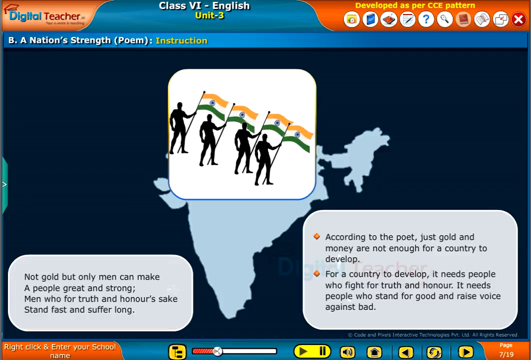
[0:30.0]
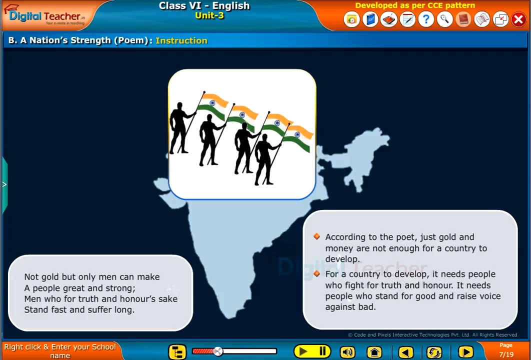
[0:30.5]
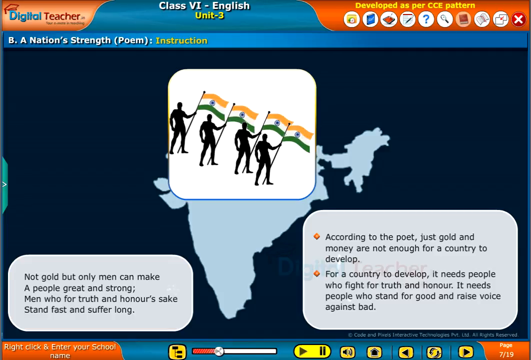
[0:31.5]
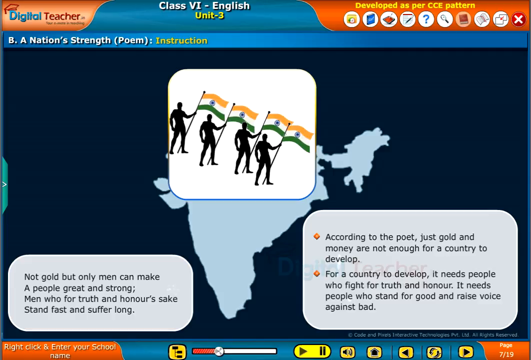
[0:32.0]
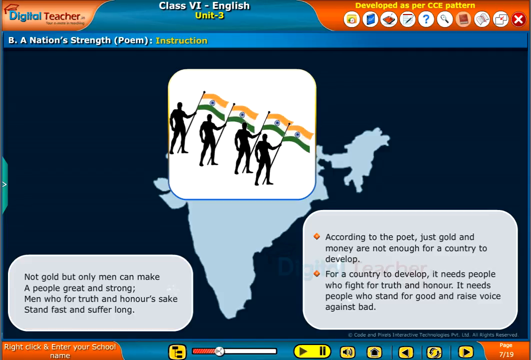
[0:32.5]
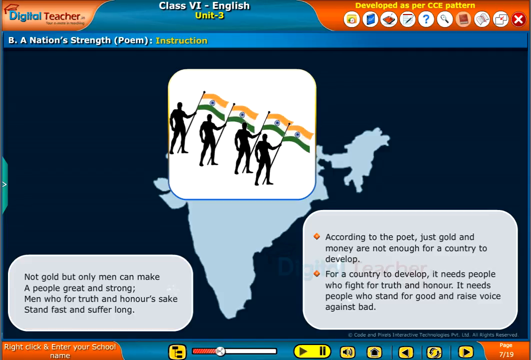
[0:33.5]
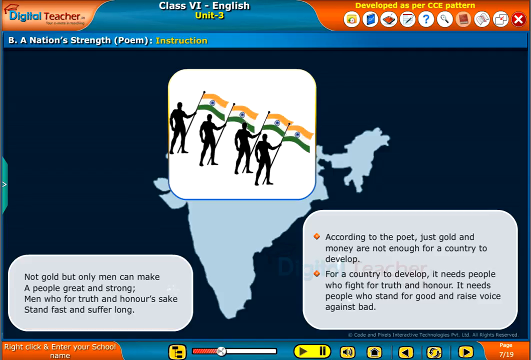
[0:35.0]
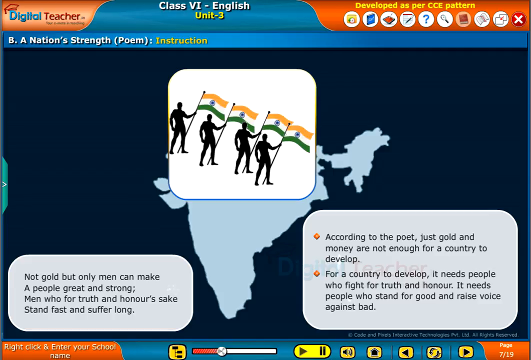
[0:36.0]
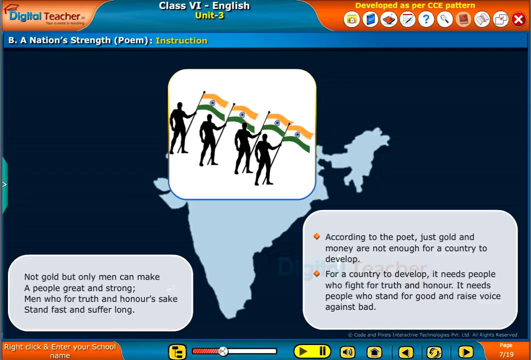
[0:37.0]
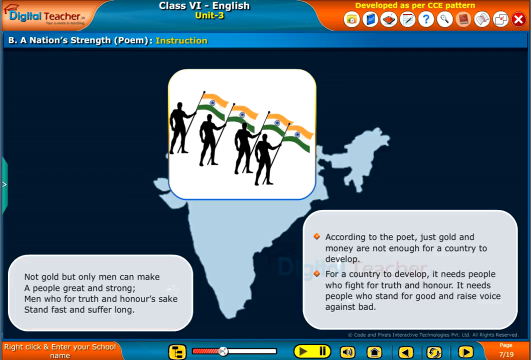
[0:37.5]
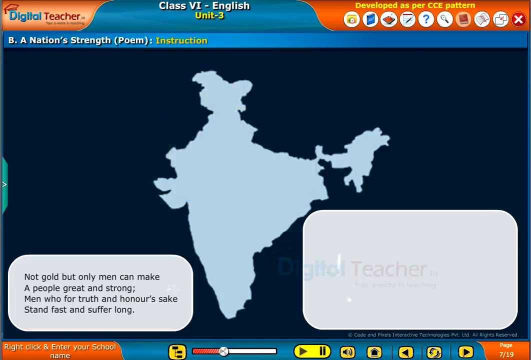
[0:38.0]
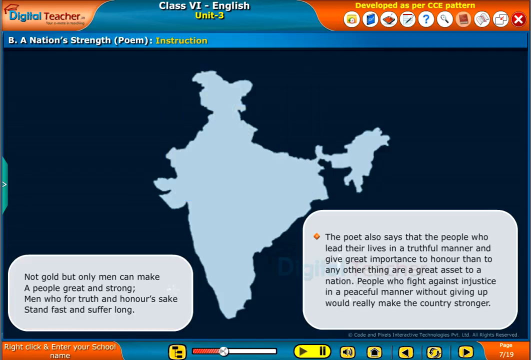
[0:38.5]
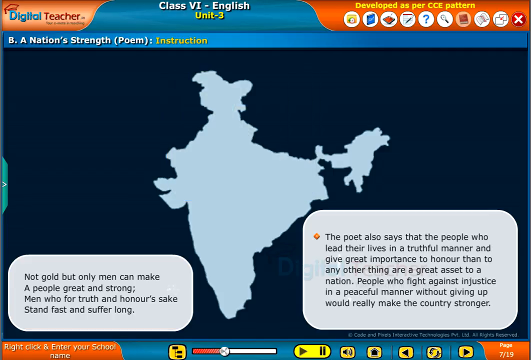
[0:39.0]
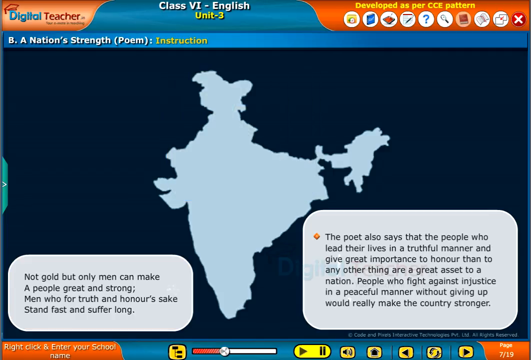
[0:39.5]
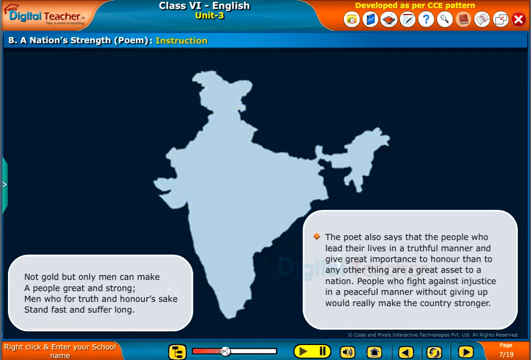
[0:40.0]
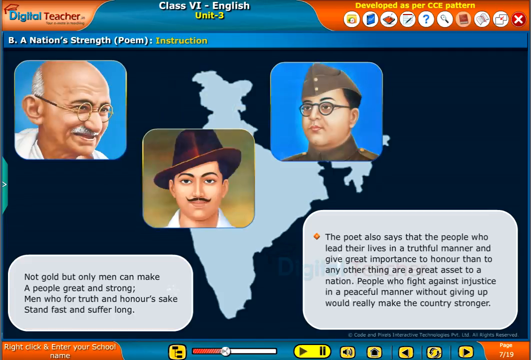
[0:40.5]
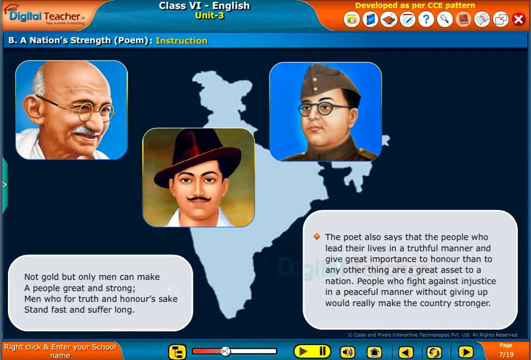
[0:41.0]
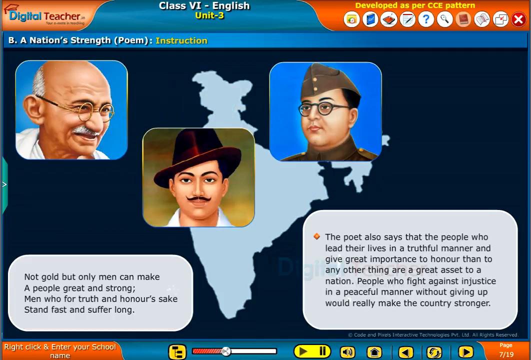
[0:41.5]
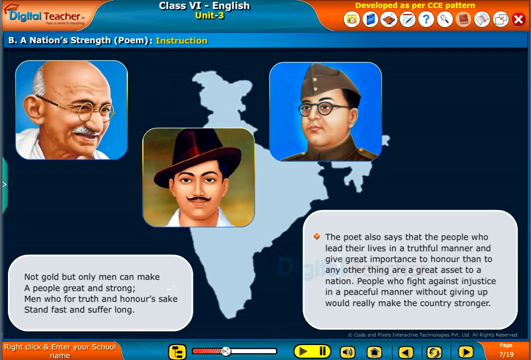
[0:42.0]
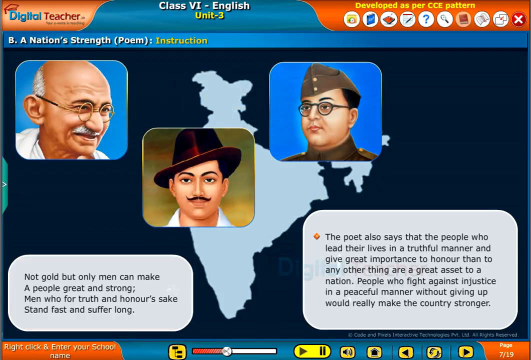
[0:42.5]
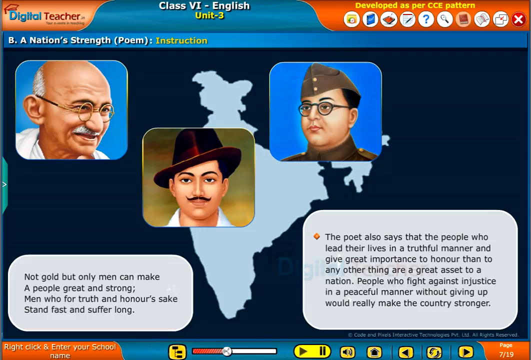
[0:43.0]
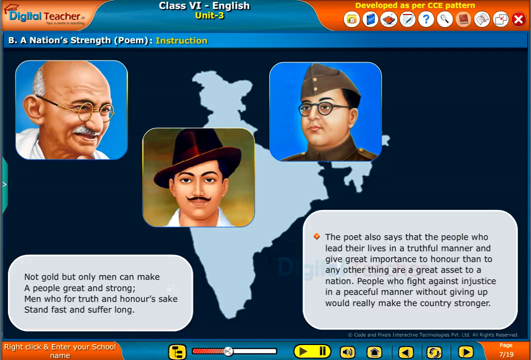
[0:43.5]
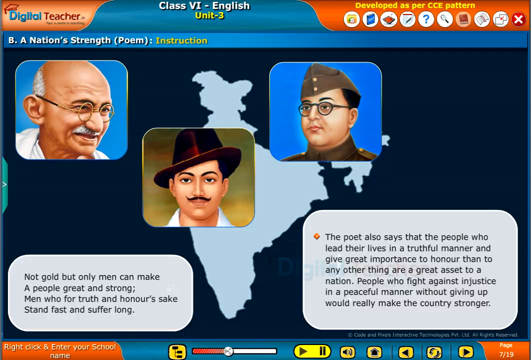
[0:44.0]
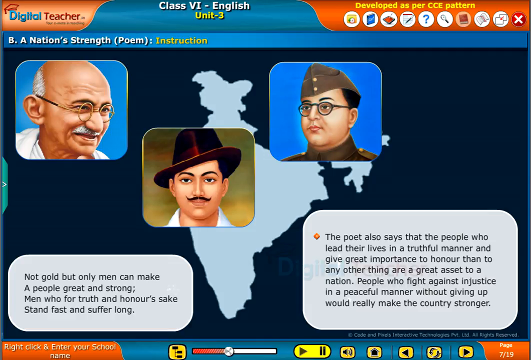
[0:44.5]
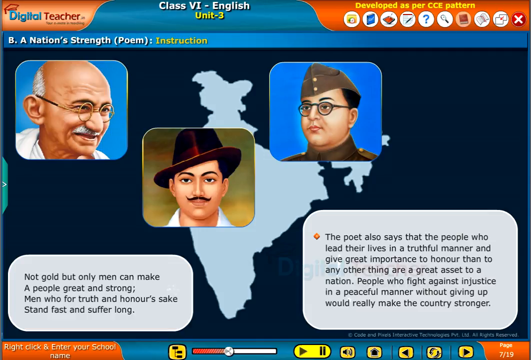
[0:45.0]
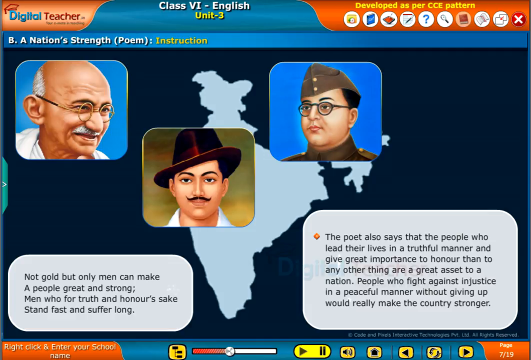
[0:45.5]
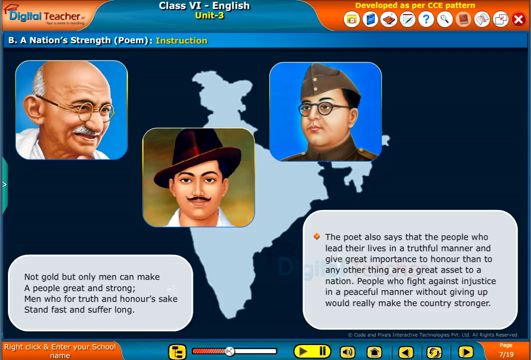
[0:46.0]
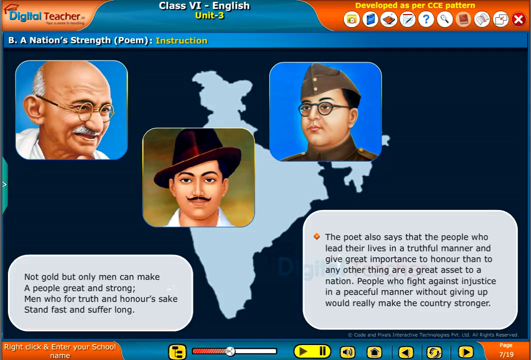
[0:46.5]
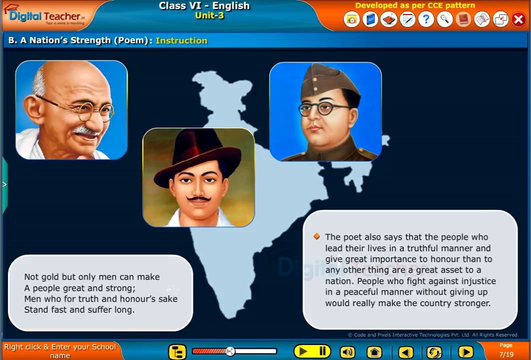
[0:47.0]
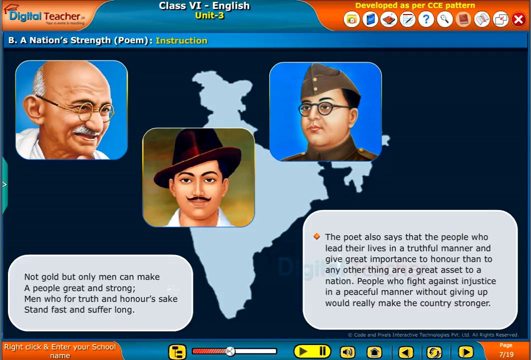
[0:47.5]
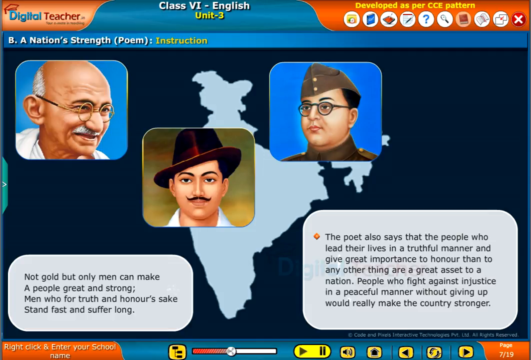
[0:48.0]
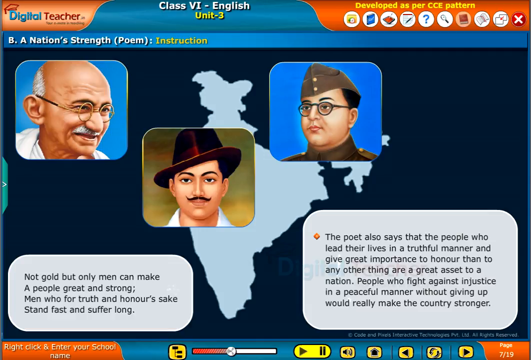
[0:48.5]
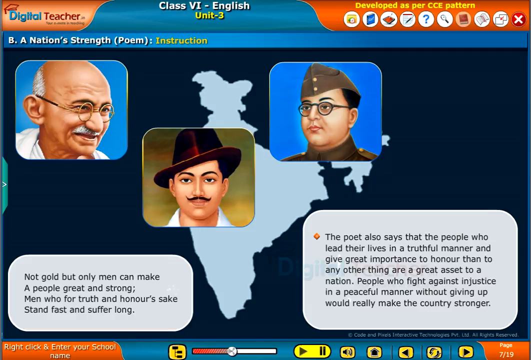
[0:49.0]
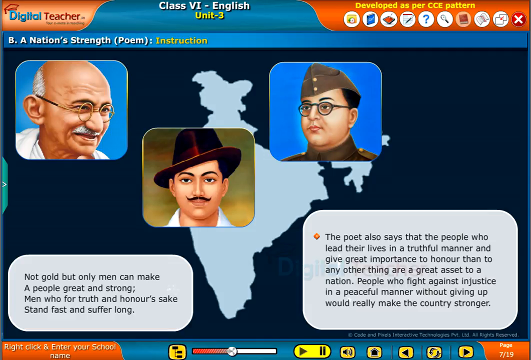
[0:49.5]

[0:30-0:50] An application screen that looks like a desktop screen shows animated instructions for an English class. The class title, "Class VI, English Unit 3", is written on the horizontal frame that runs across the top of the screen. The screen has a dark background. At the lower left and lower right are text inserts in rectangular frames with curved corners. In the upper middle are silhouettes of four men holding the Indian flag, and in the background on the black screen is a map of India in pale blue. This screen stays for about seven seconds. The images then disappear, leaving the background with the map of India, and are replaced by three profile images of three men. The man at the upper left is Mahatma Gandhi. The man in the lower middle has a hat that looks like a fedora and a mustache. The man at the upper right wears what looks like a brown beret and a uniform, with glasses. The images remain on screen along with the two text inserts at the bottom.